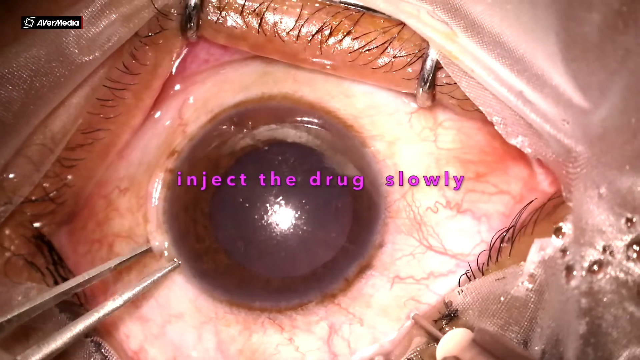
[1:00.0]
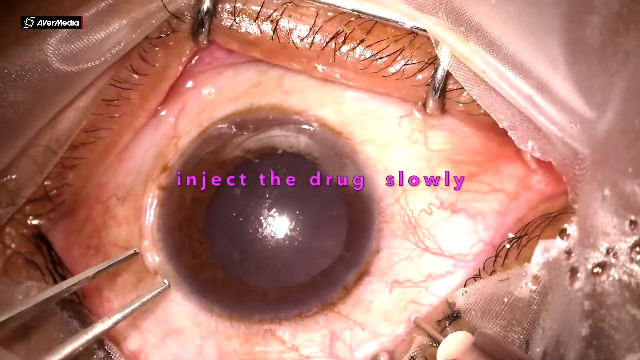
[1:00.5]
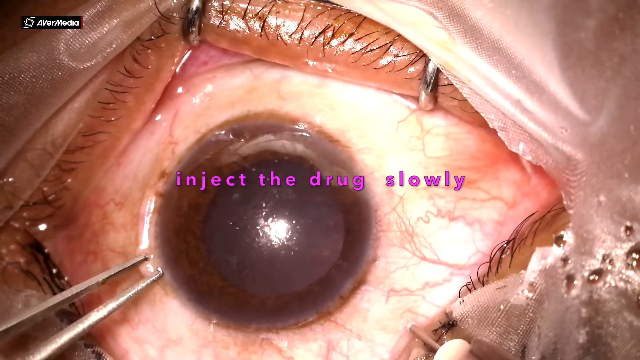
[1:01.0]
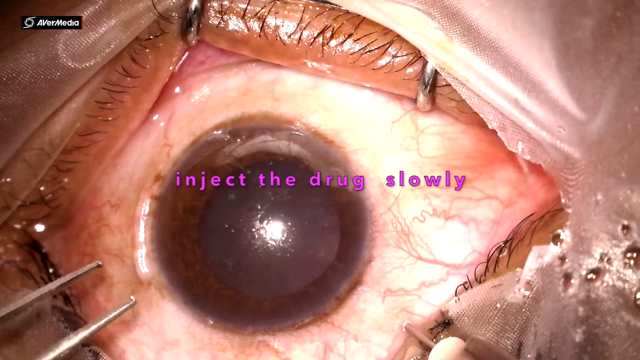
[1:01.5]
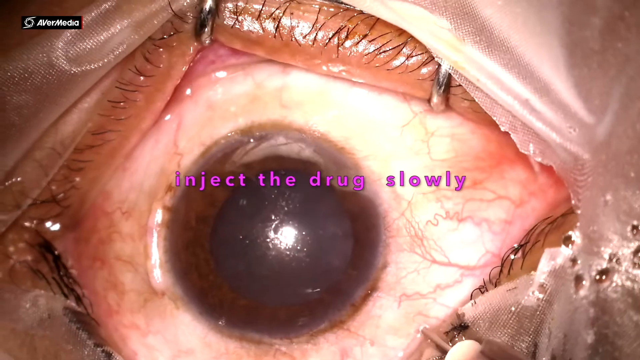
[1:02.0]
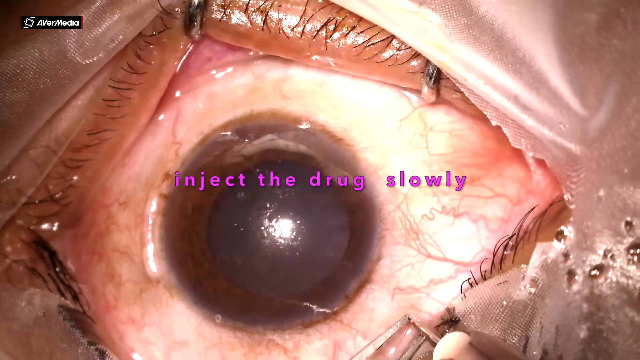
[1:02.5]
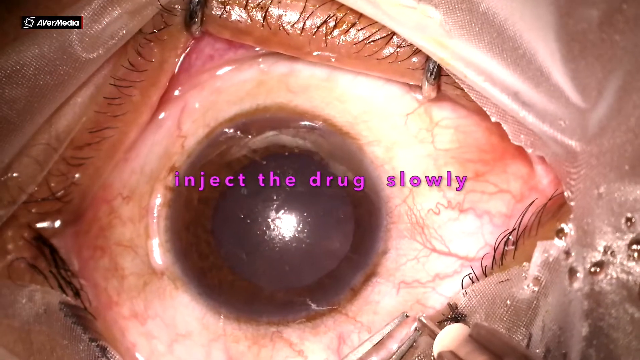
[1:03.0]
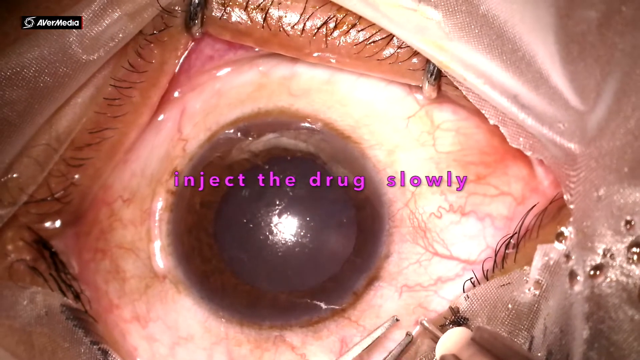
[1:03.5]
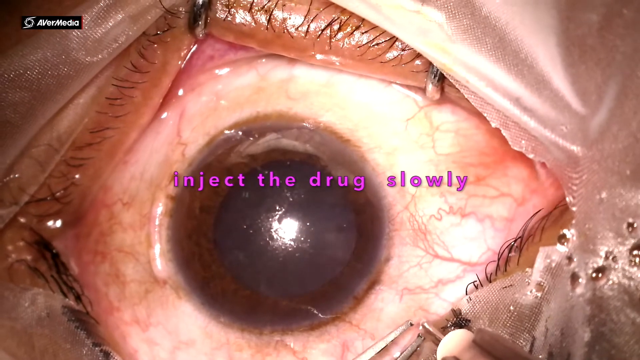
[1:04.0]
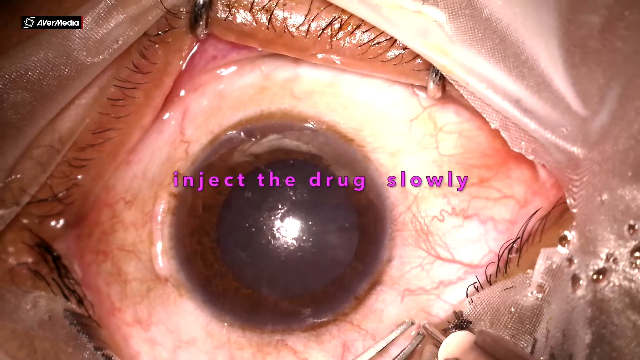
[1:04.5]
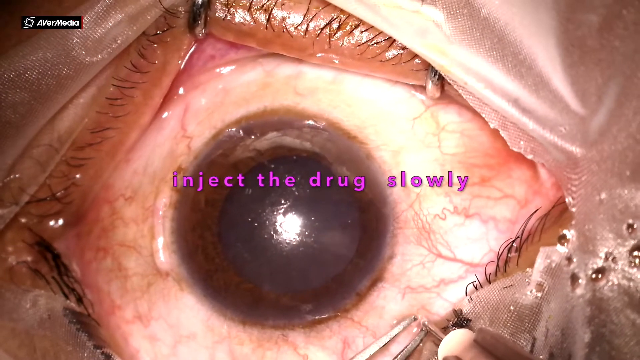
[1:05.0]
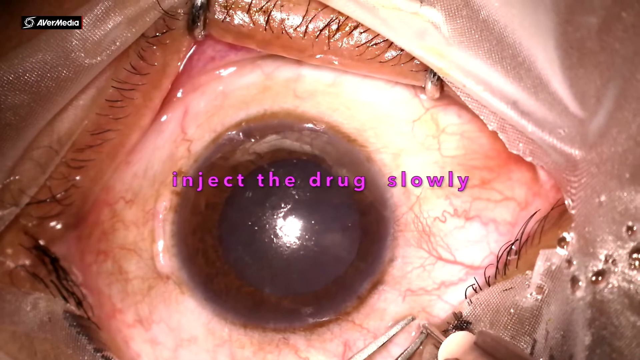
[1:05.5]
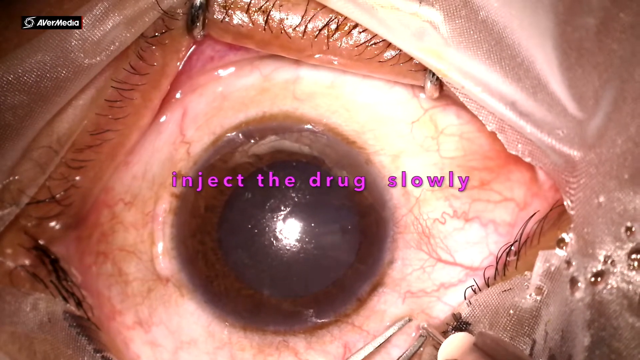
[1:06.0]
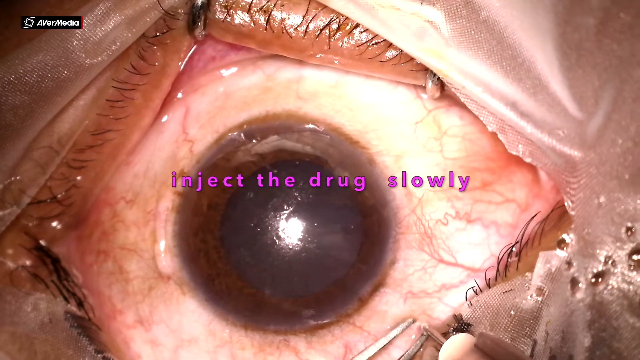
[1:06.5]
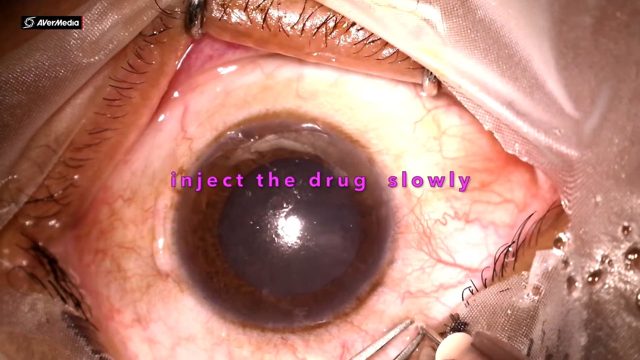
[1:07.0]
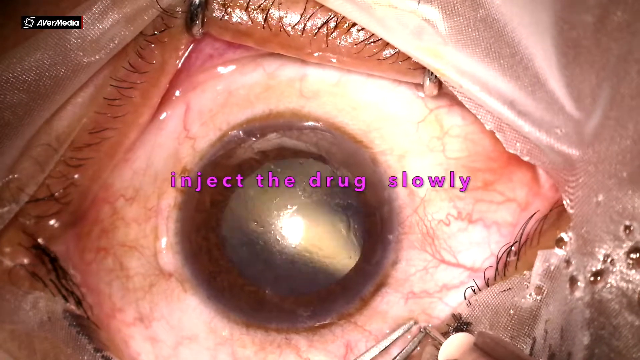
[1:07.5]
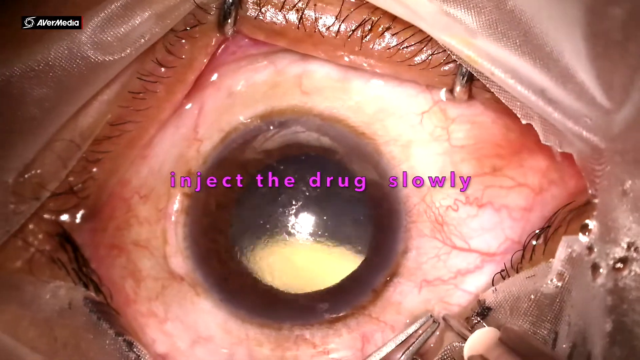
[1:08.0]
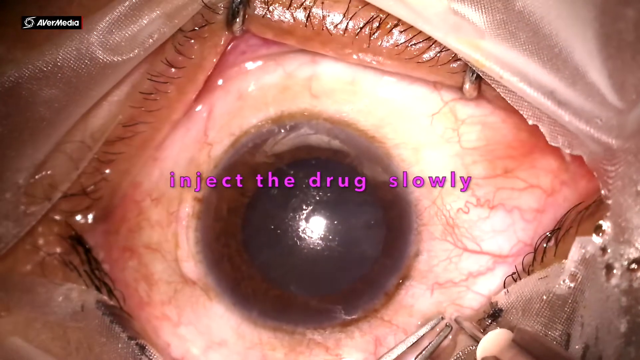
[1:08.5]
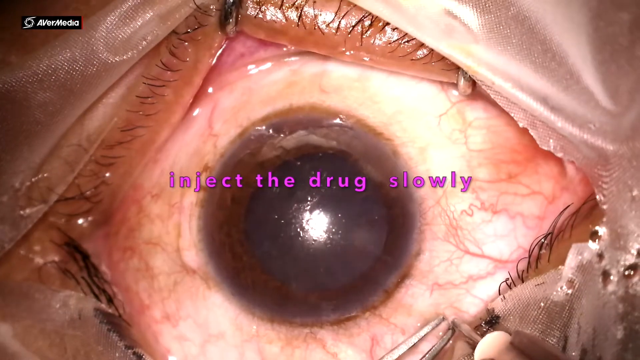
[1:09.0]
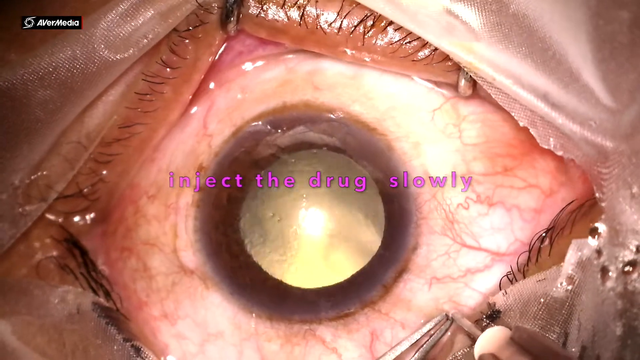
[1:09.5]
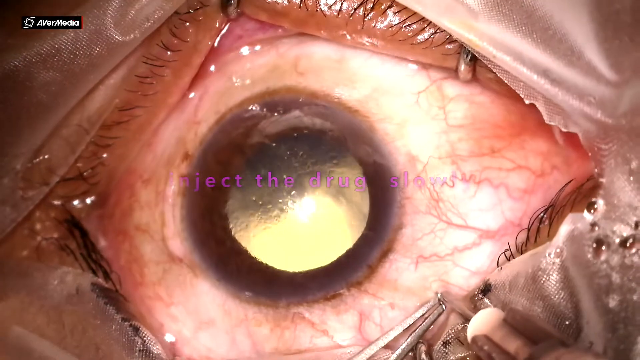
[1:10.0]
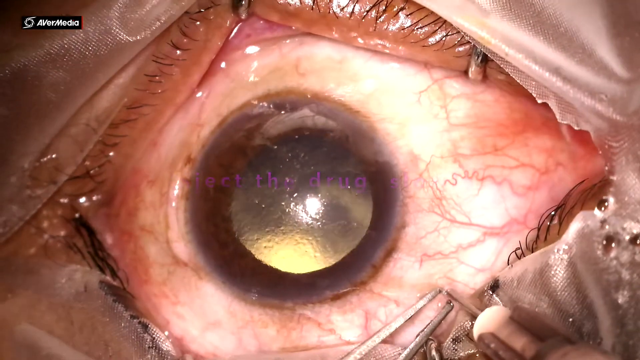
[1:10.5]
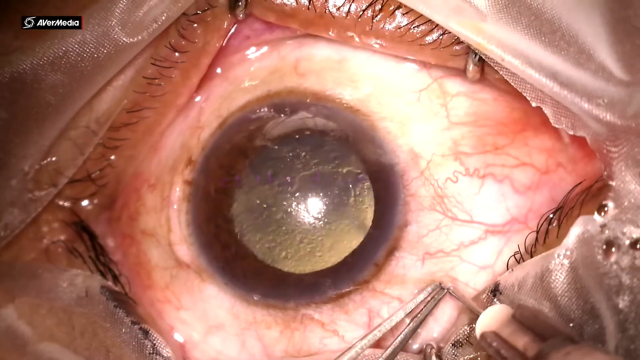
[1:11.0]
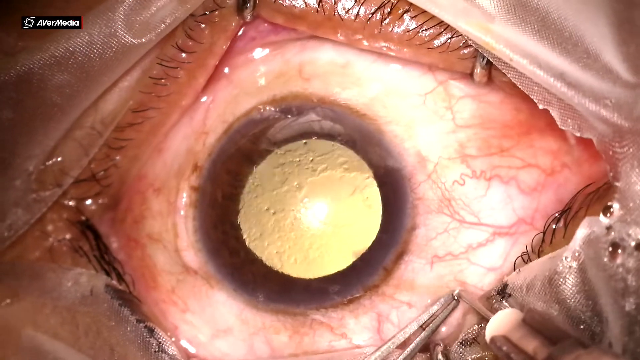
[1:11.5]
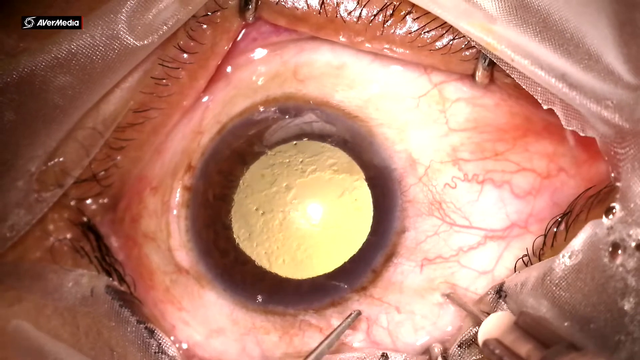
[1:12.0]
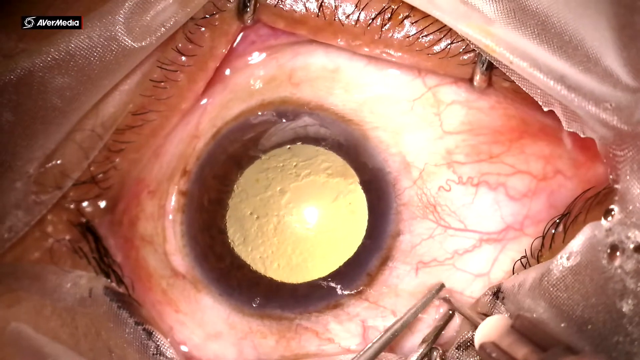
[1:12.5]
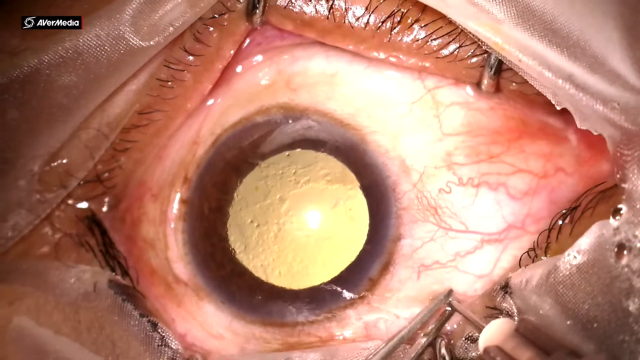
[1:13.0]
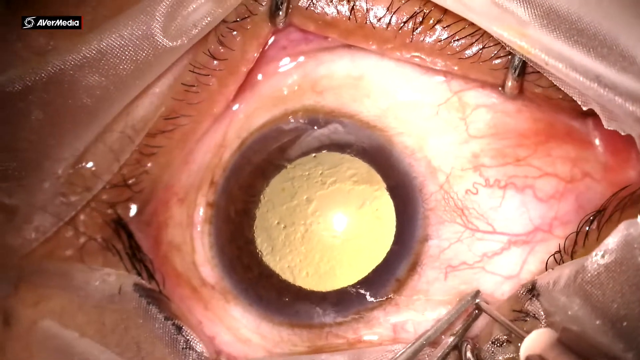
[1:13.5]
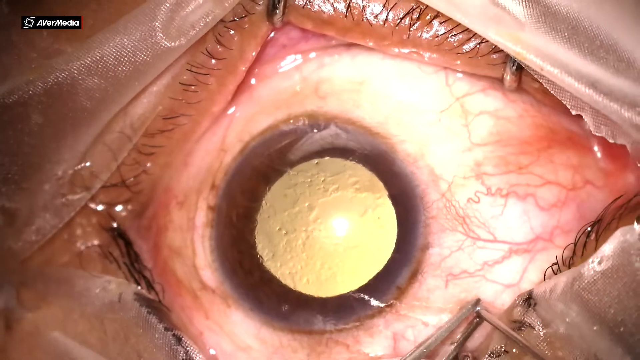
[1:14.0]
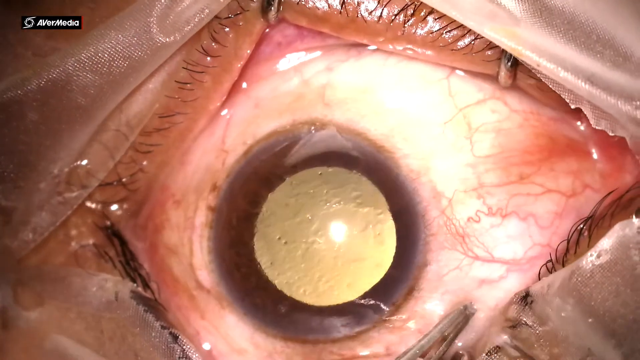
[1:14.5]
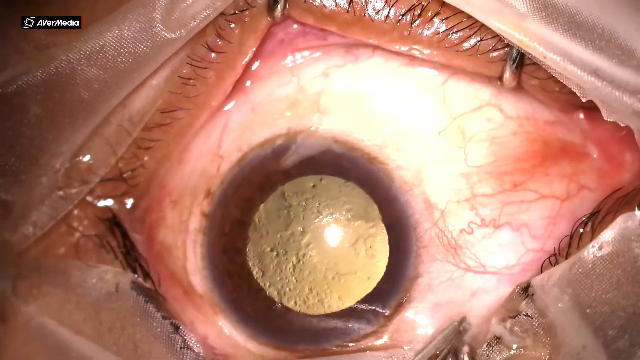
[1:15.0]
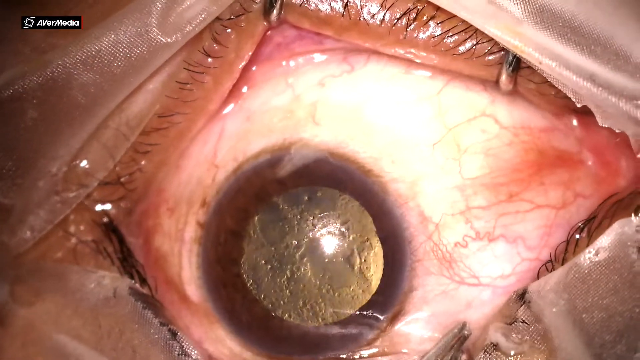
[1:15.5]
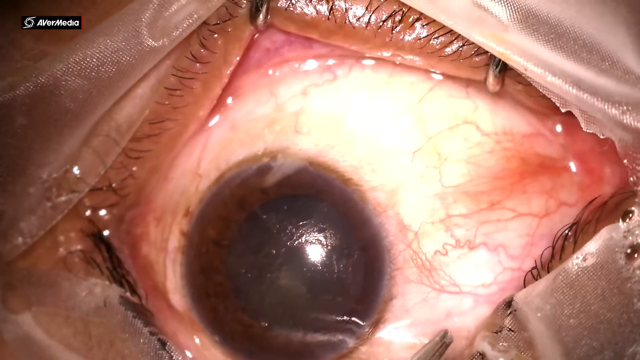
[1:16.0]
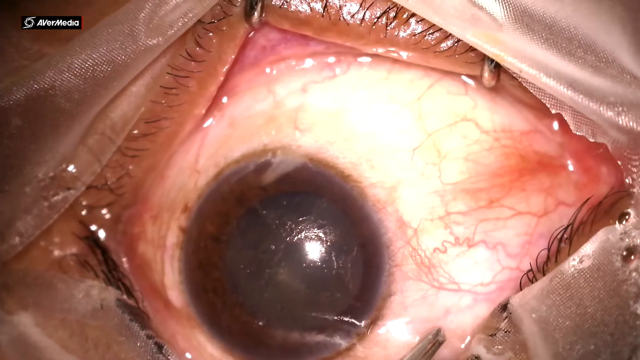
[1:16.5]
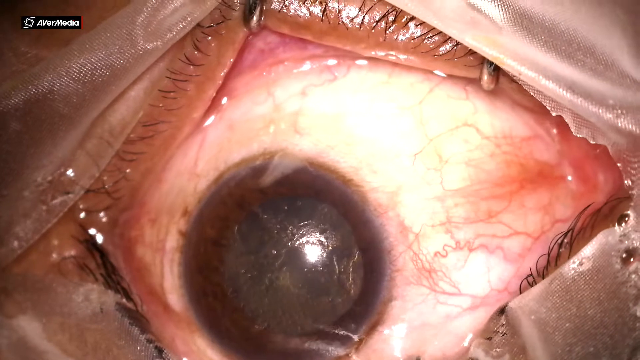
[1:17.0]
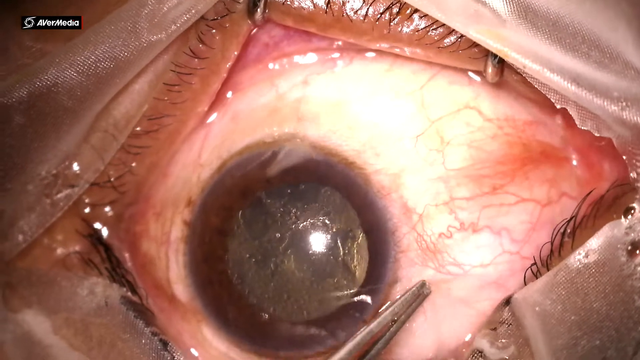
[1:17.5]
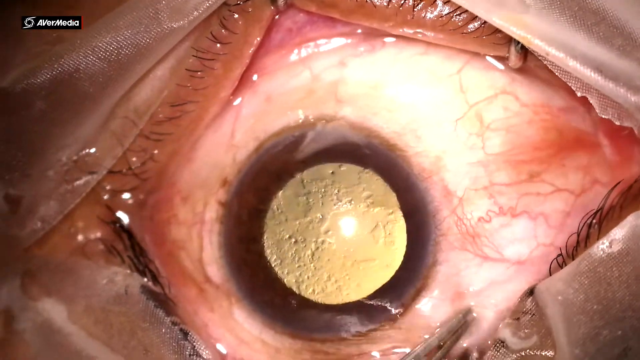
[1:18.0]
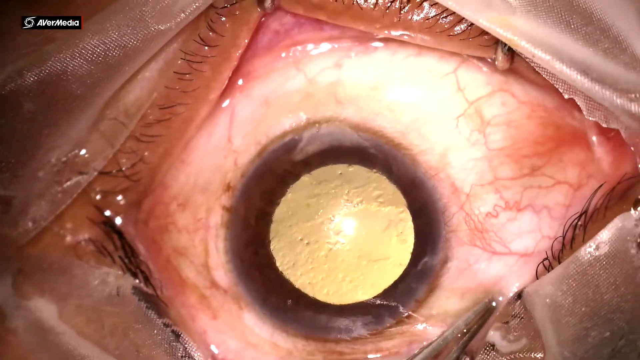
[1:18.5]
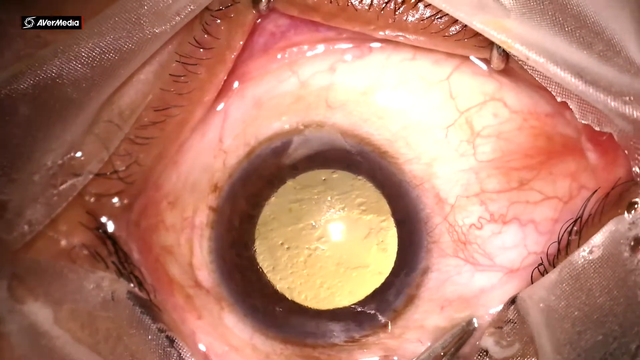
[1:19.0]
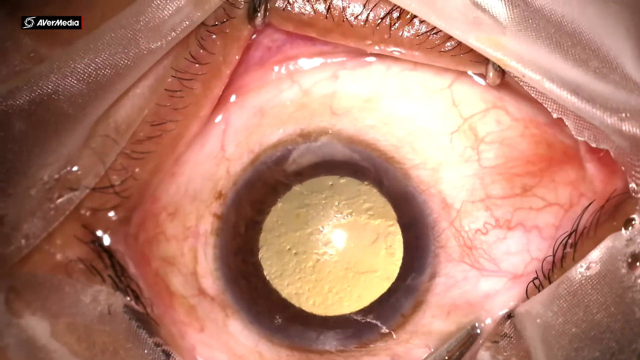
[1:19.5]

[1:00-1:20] The eyeball surgery continues, and the text still reads "inject the drug slowly". The calipers or picker that were previously on the left have moved away, leaving just the needle plugged into the eyeball. A light is visible in the eyeball, seemingly the eye looking at a light. The eyeball is very black, and the light reflected off it makes it look very yellow; for the rest of the shot it looks mostly yellow, almost as if looking directly at the sun.